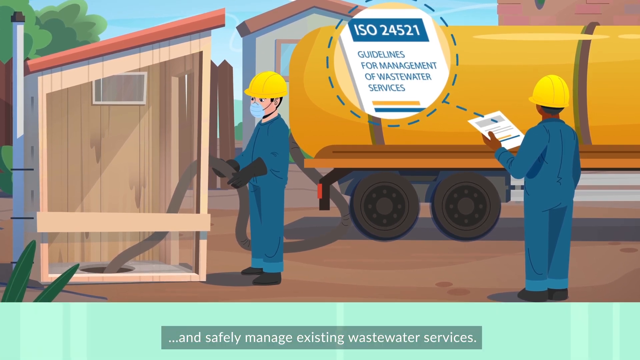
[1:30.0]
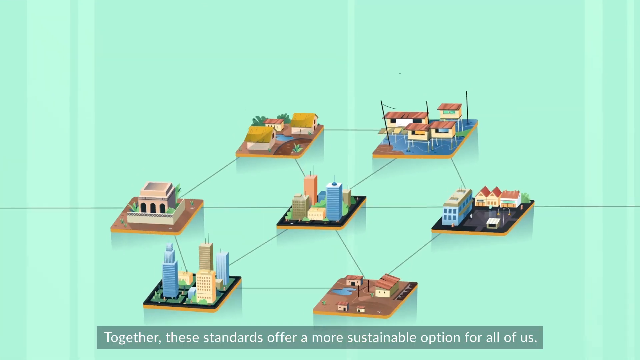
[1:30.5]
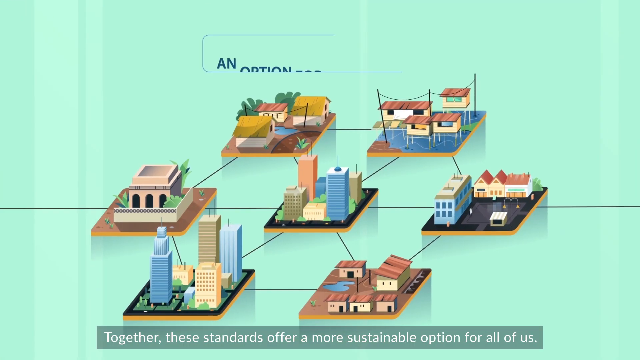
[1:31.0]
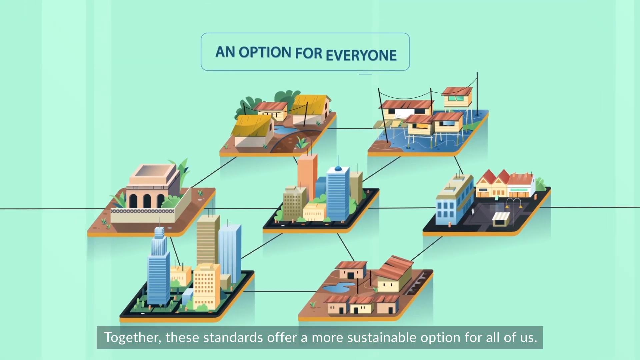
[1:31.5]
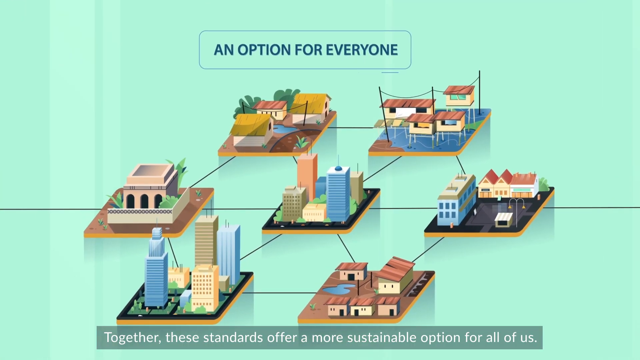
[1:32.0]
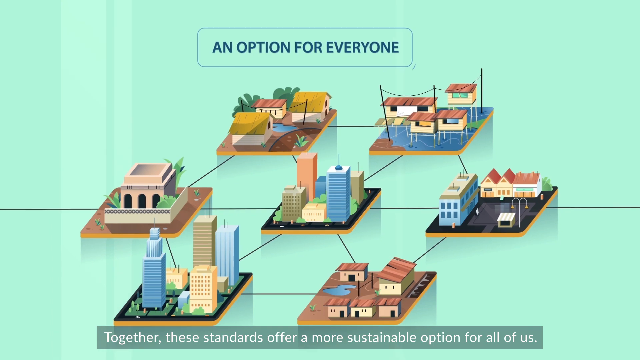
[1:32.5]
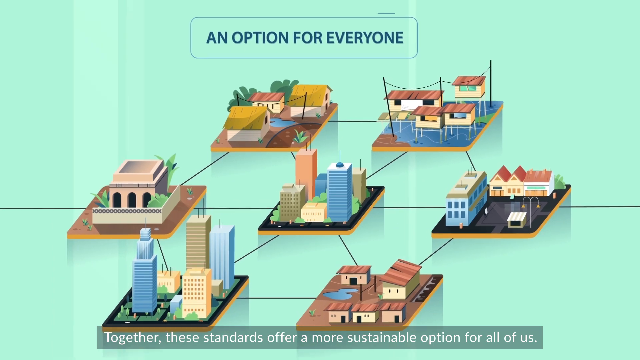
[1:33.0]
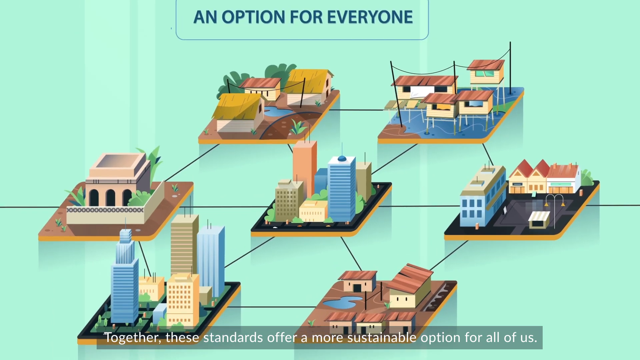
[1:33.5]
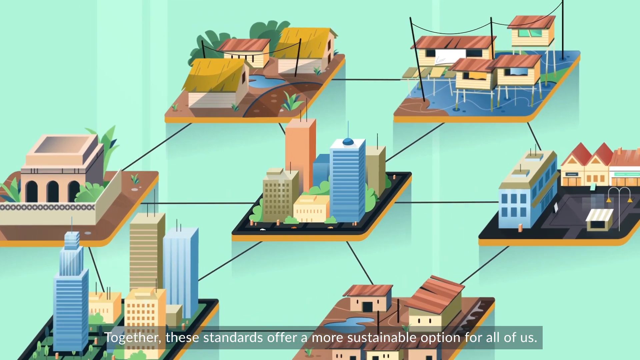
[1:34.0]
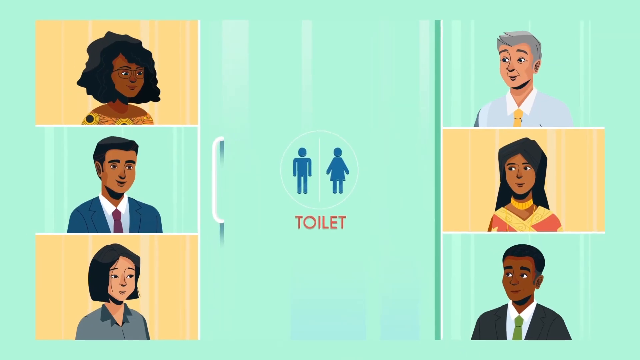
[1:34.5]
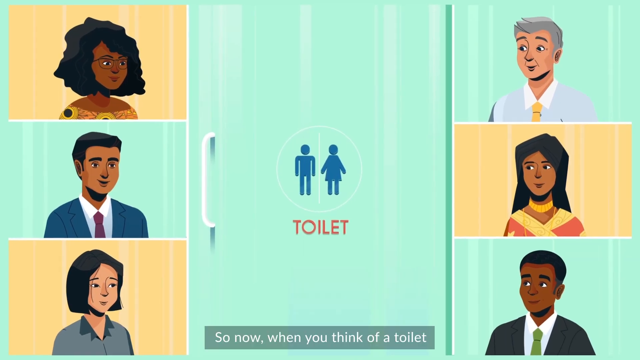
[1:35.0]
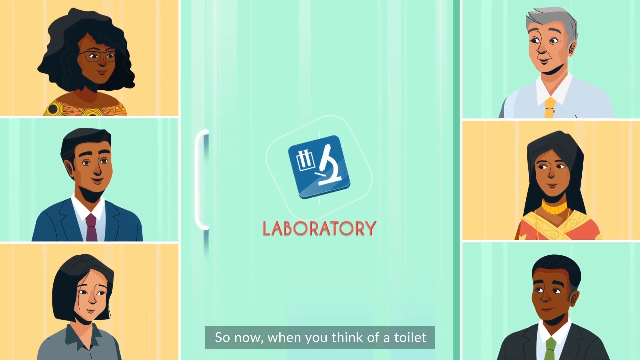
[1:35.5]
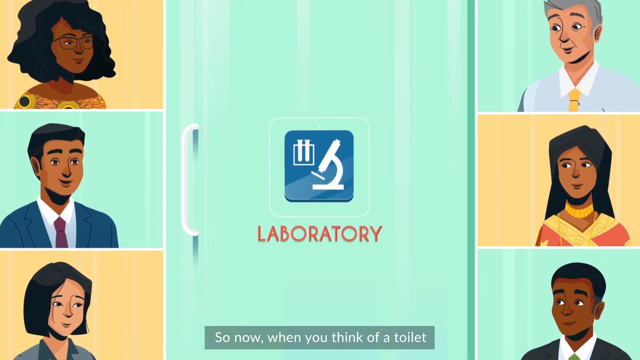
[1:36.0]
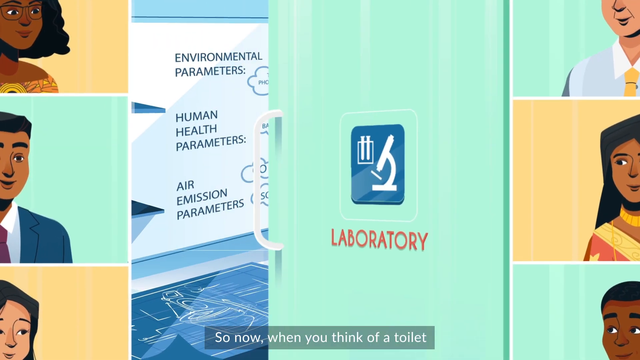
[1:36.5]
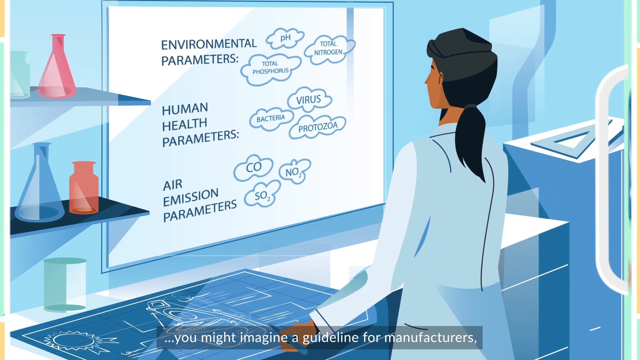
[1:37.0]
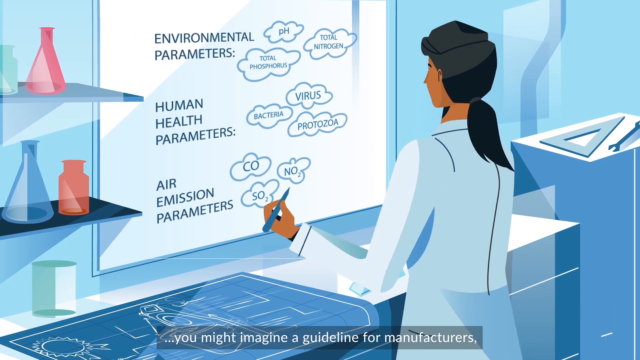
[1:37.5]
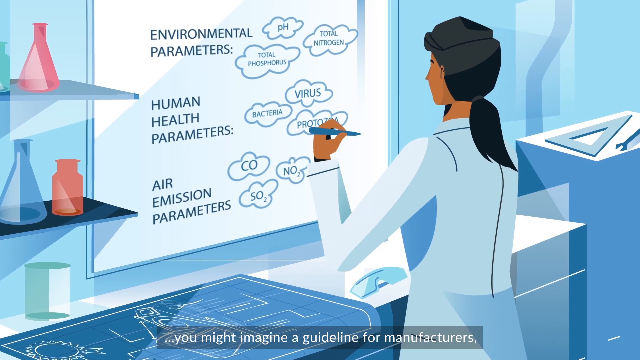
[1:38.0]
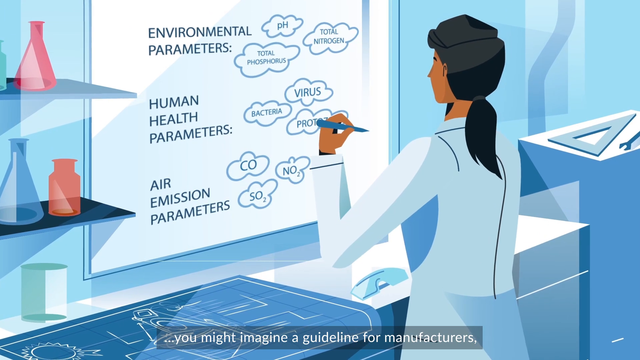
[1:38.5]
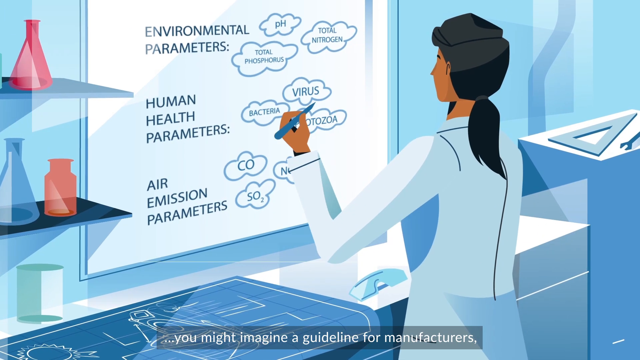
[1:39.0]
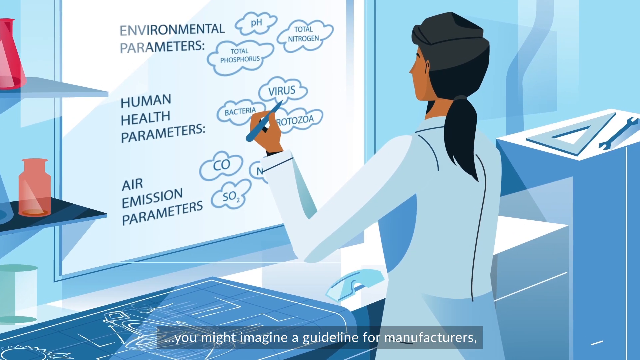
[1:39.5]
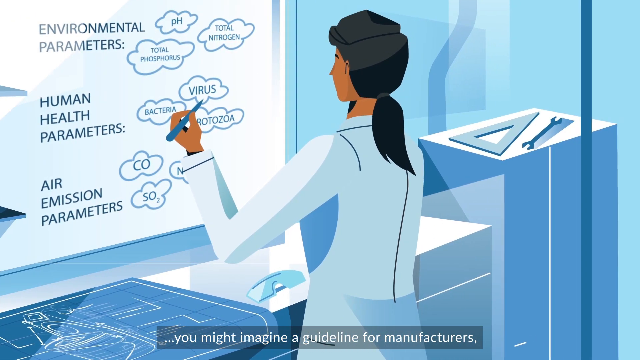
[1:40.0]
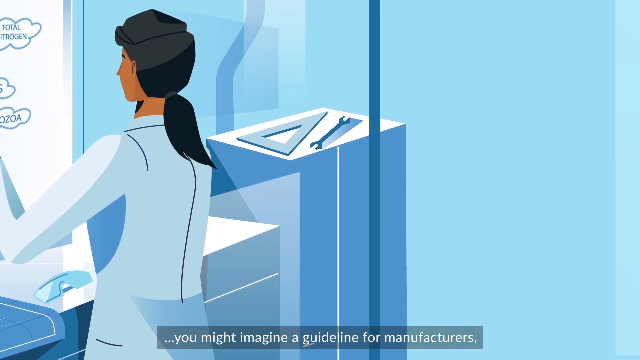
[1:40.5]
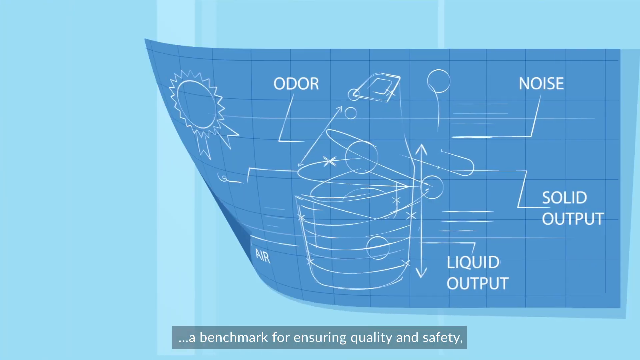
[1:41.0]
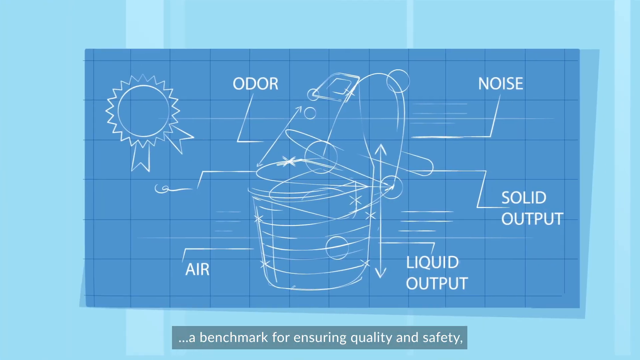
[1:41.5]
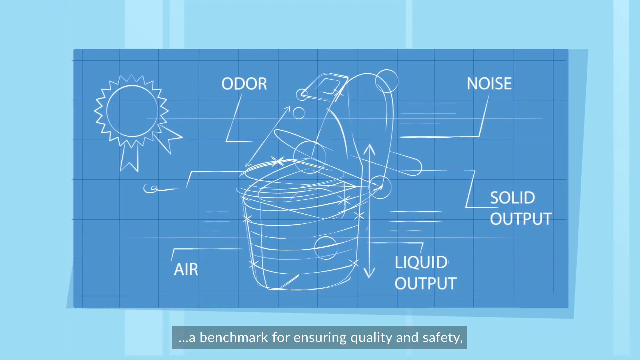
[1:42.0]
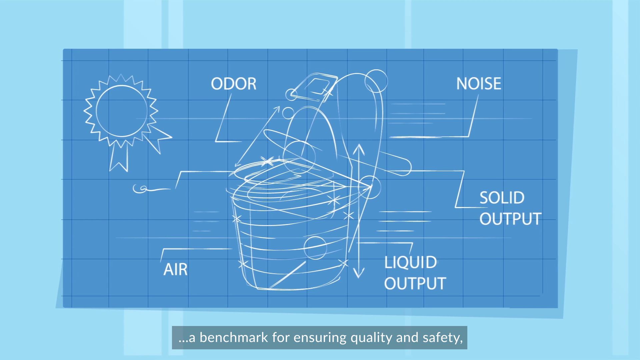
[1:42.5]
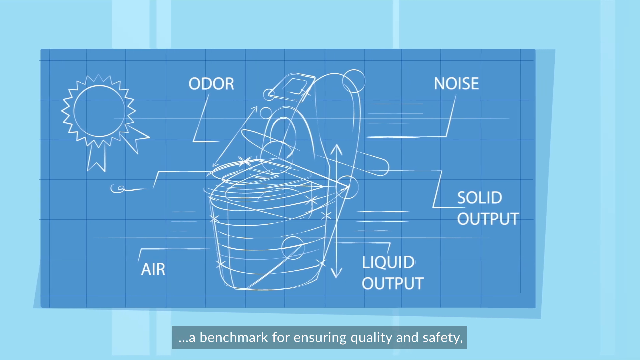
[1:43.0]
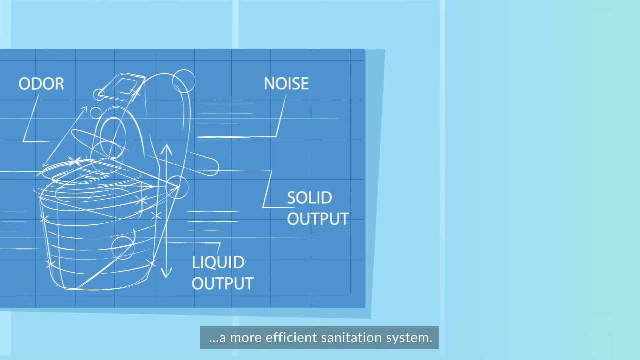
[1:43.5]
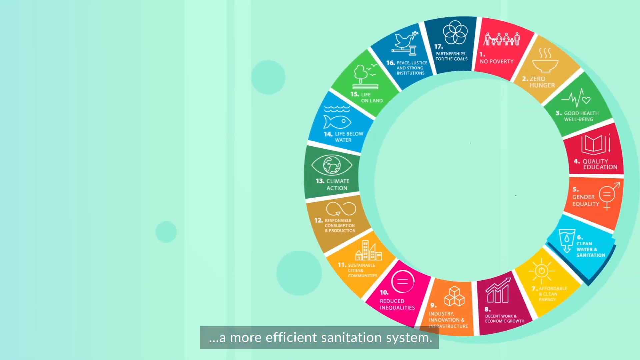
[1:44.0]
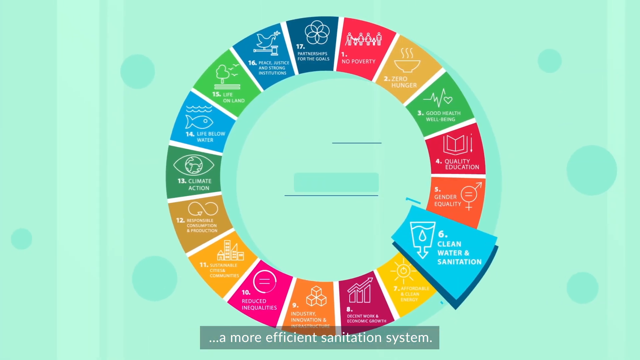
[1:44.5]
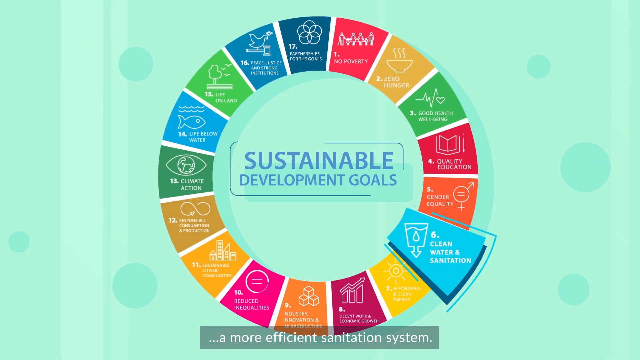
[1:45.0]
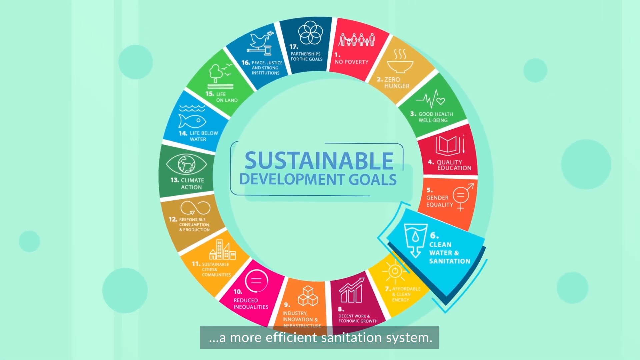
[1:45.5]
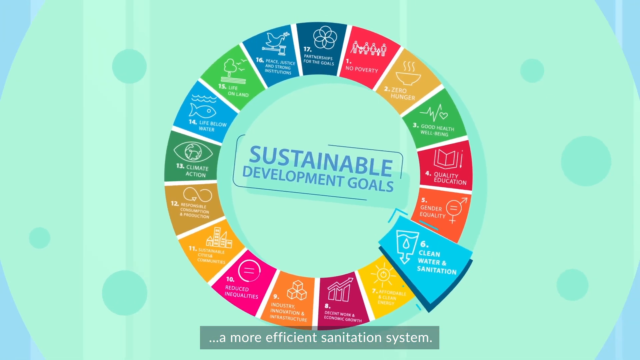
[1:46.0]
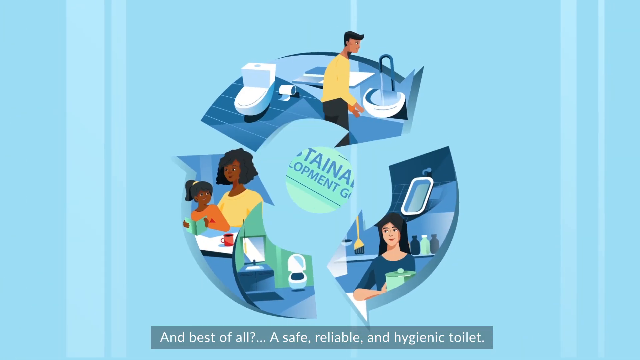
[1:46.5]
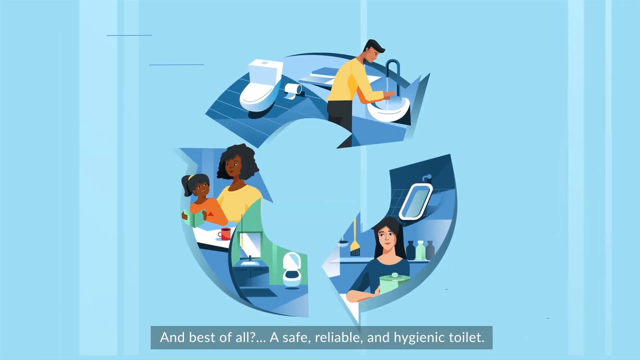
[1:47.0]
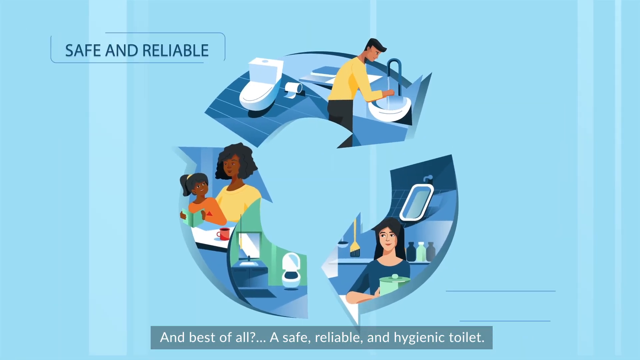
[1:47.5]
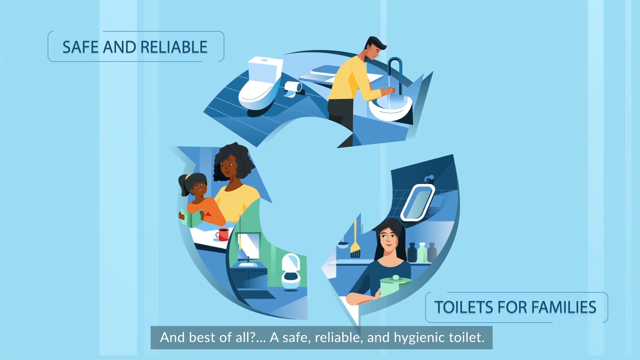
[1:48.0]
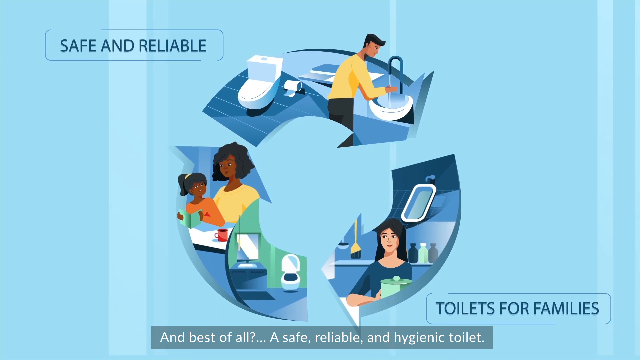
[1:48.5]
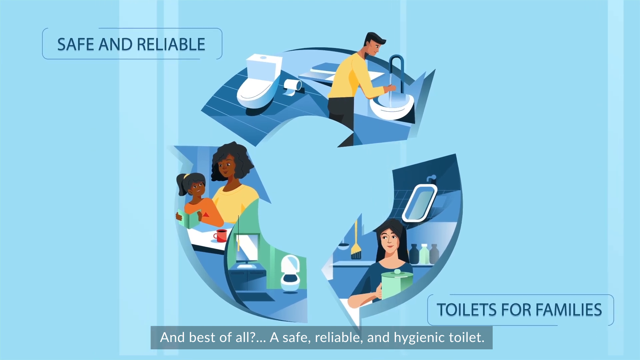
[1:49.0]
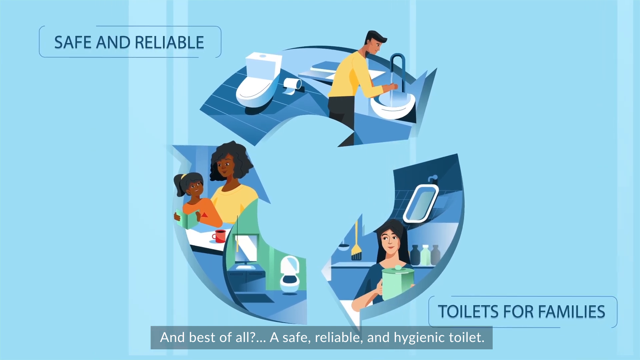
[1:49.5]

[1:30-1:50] The word 'toilet' is written on a door, and a man and a woman are drawn on the door. The video shows how waste goes from the toilet, and sewage is coming out from the toilets. People at a market sell fruits and different types of things. A lad is trying to cross the road.